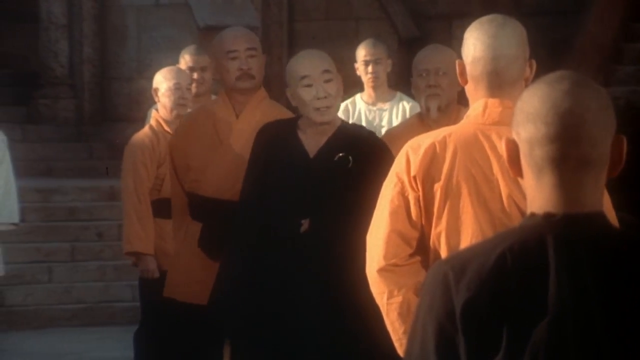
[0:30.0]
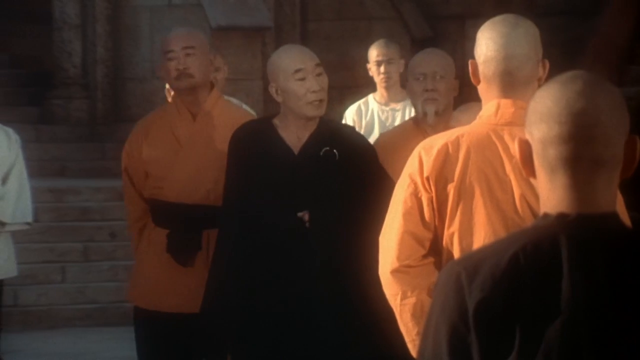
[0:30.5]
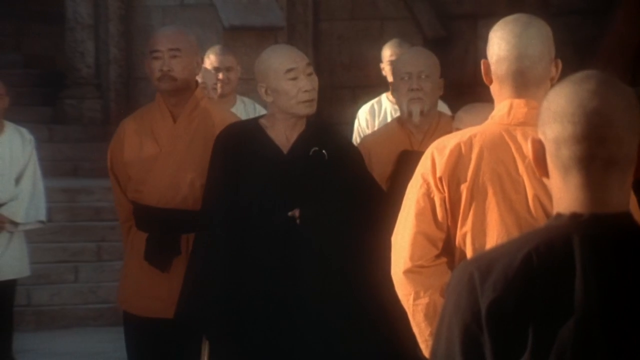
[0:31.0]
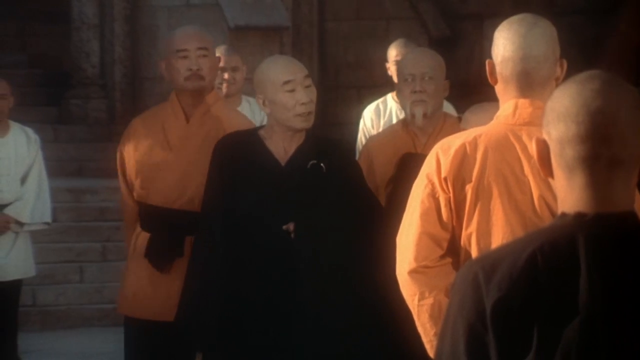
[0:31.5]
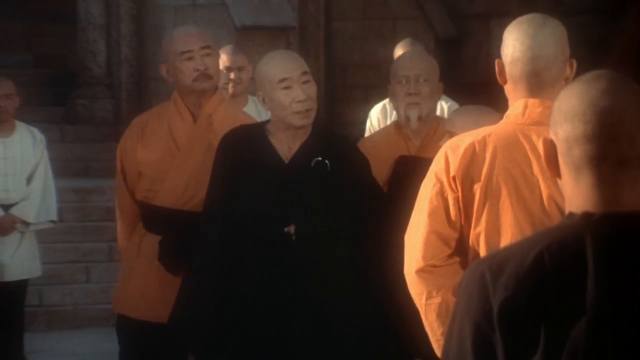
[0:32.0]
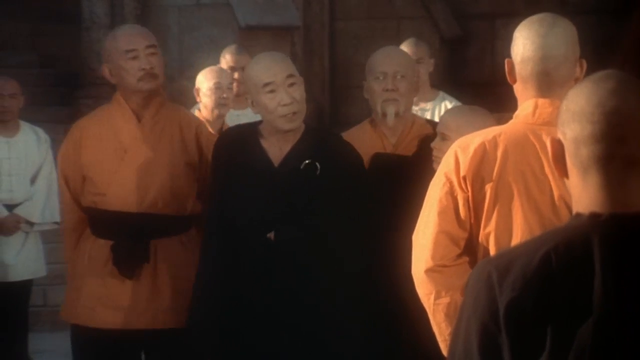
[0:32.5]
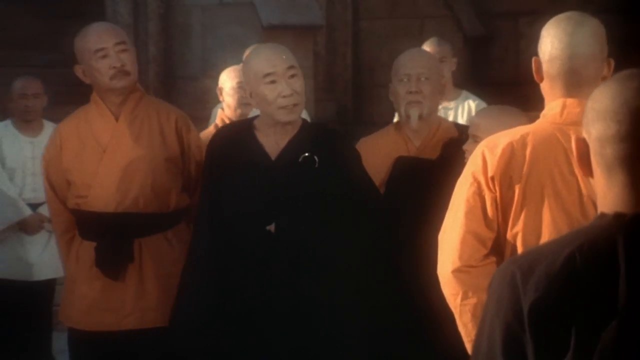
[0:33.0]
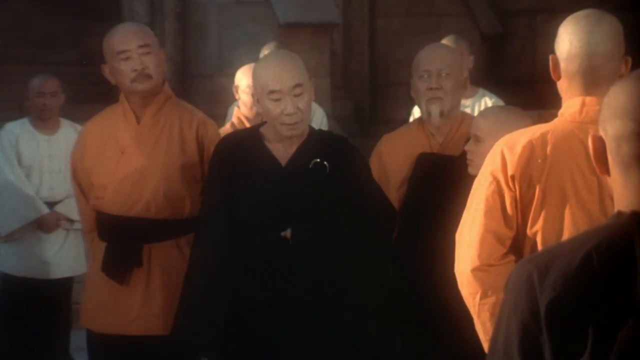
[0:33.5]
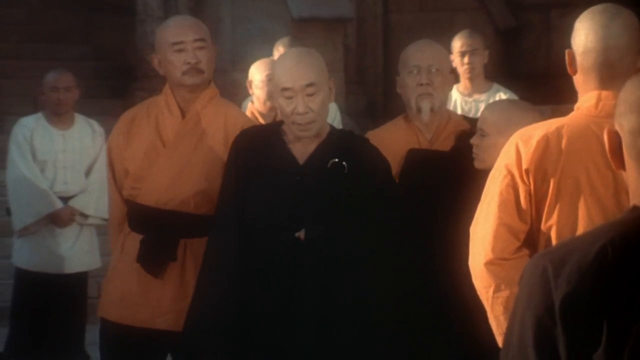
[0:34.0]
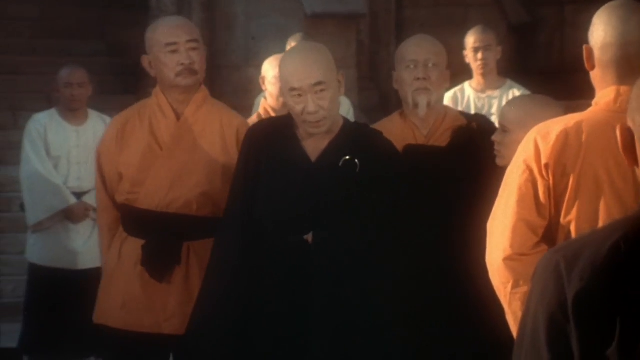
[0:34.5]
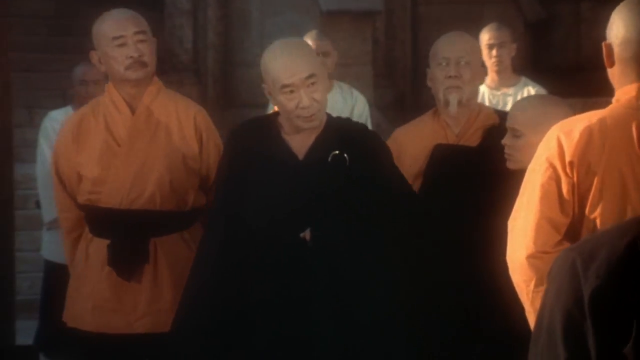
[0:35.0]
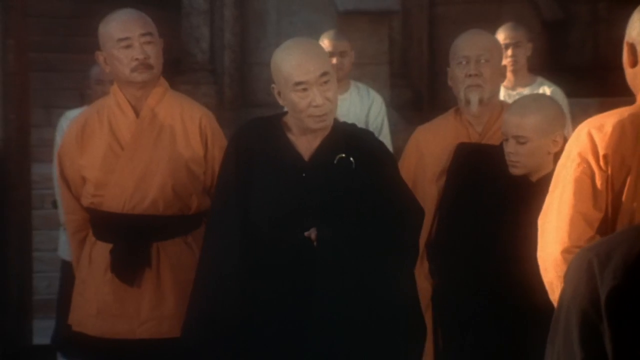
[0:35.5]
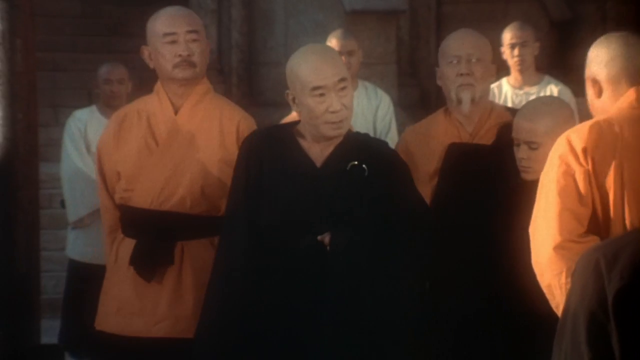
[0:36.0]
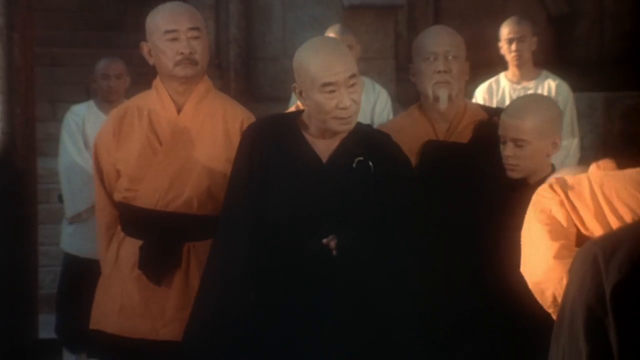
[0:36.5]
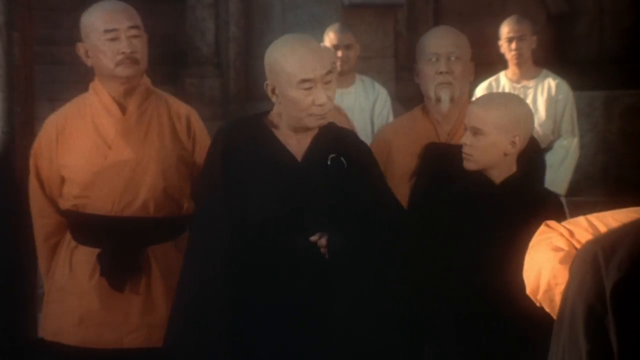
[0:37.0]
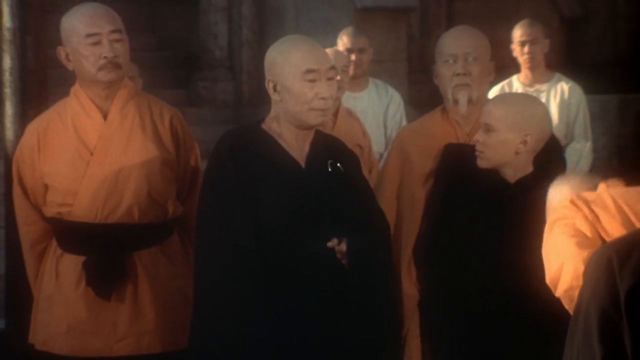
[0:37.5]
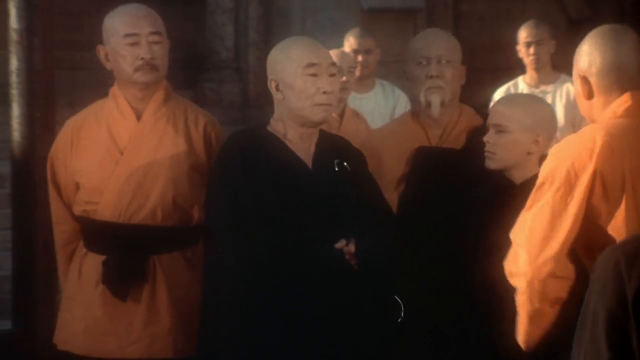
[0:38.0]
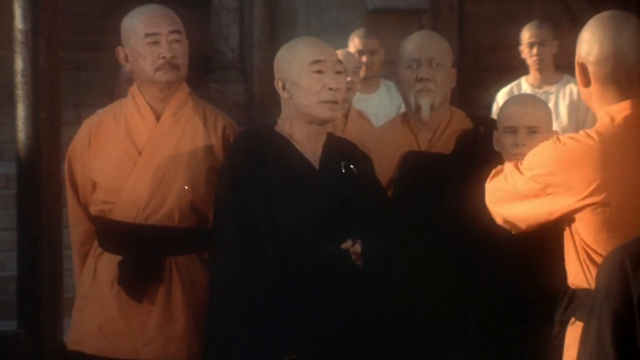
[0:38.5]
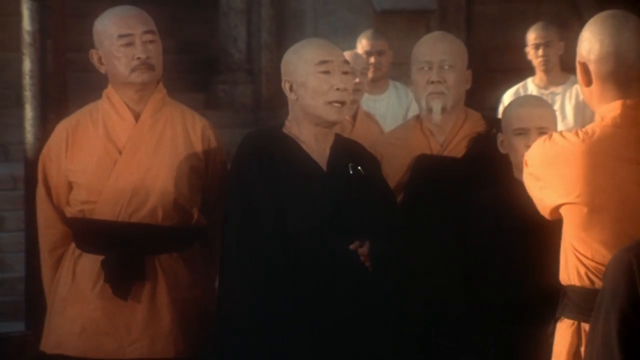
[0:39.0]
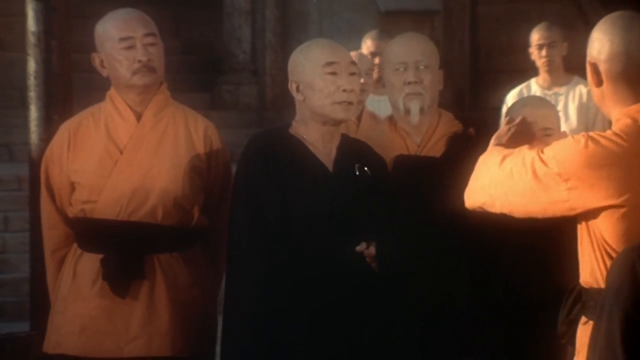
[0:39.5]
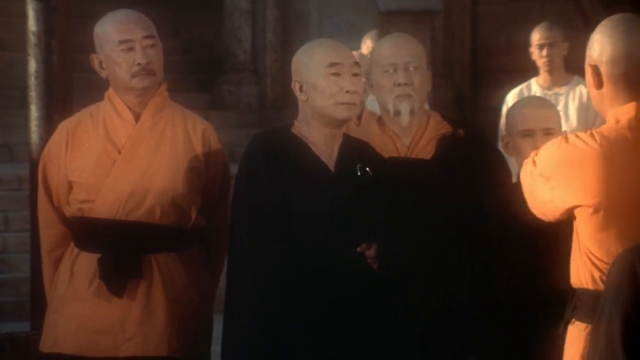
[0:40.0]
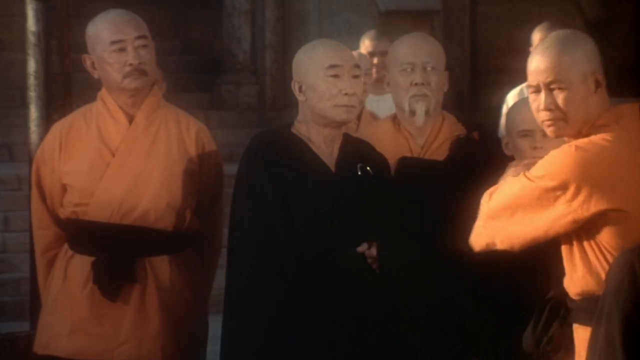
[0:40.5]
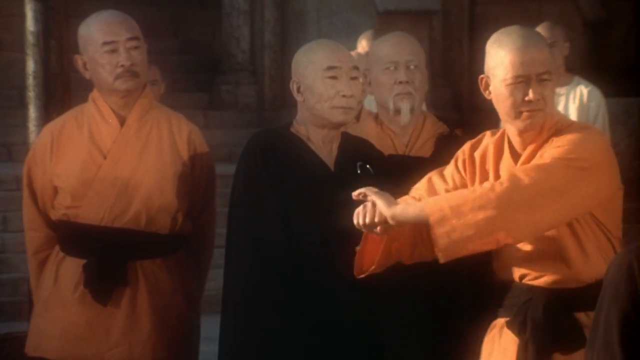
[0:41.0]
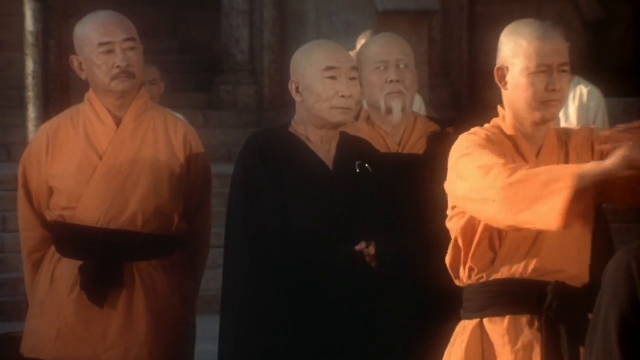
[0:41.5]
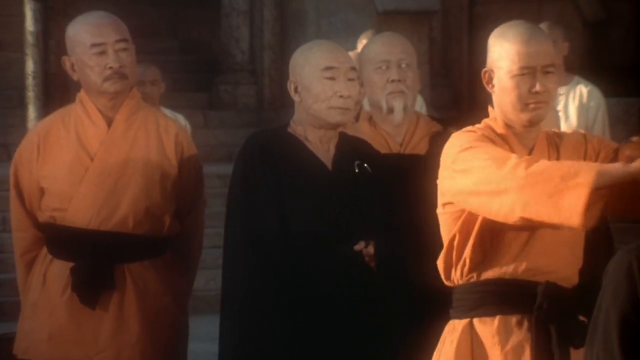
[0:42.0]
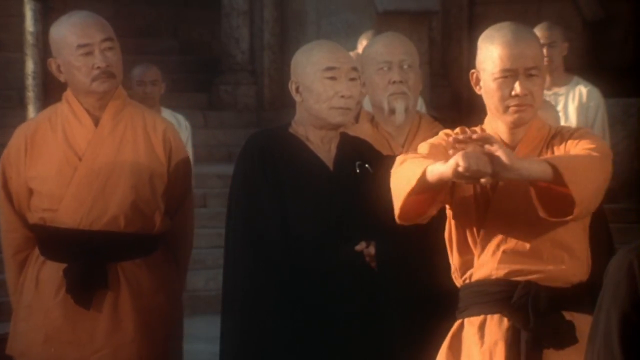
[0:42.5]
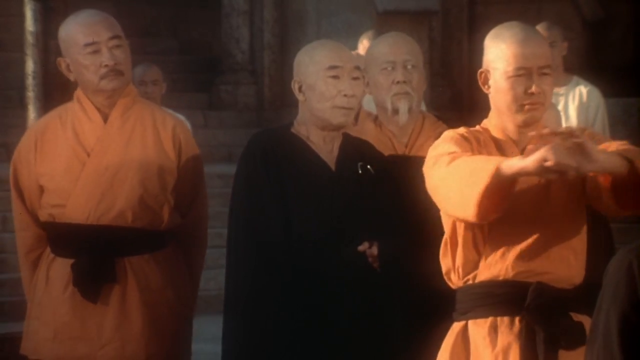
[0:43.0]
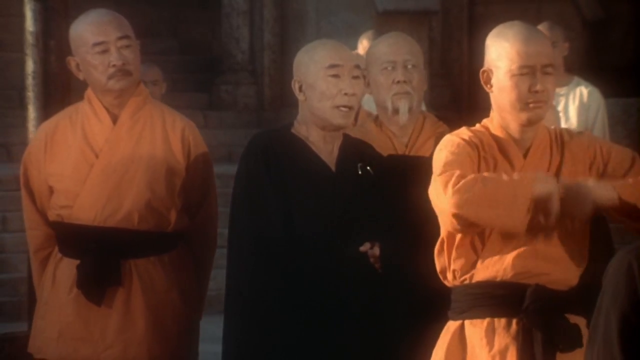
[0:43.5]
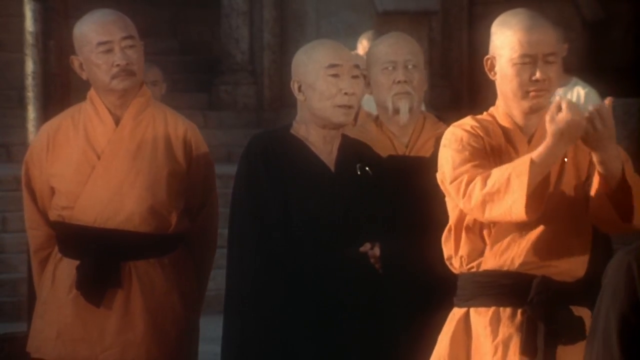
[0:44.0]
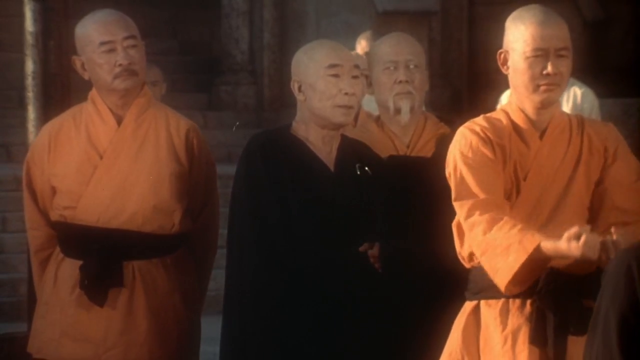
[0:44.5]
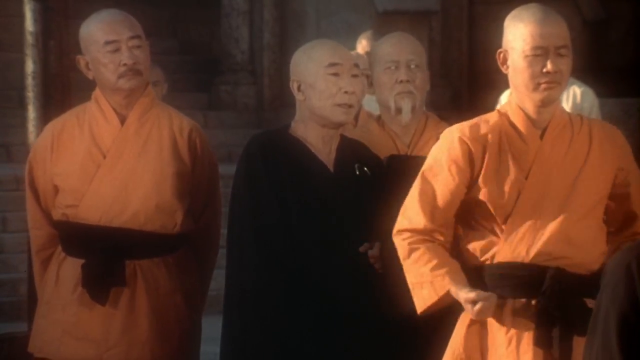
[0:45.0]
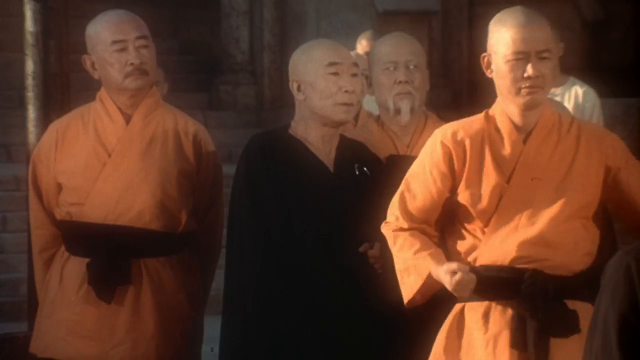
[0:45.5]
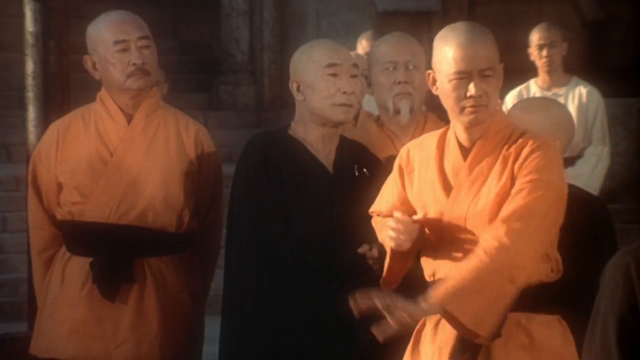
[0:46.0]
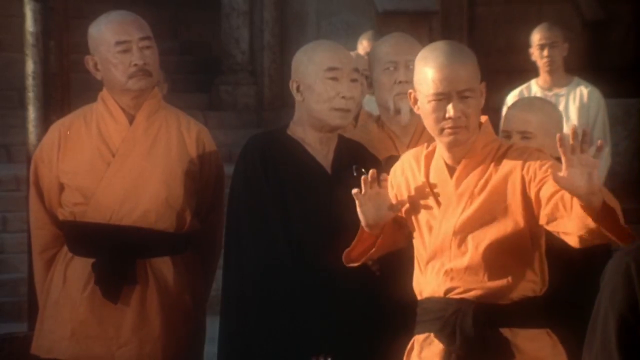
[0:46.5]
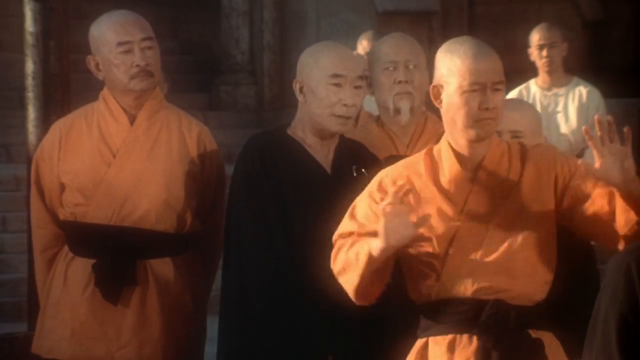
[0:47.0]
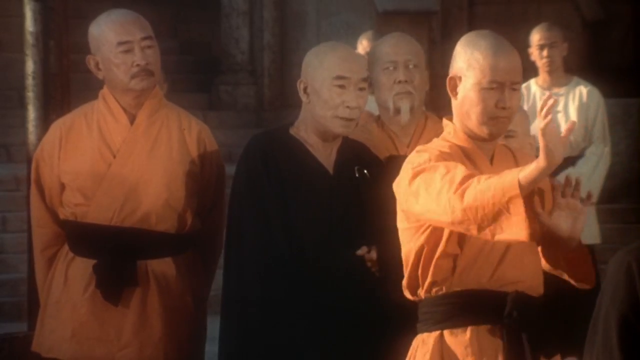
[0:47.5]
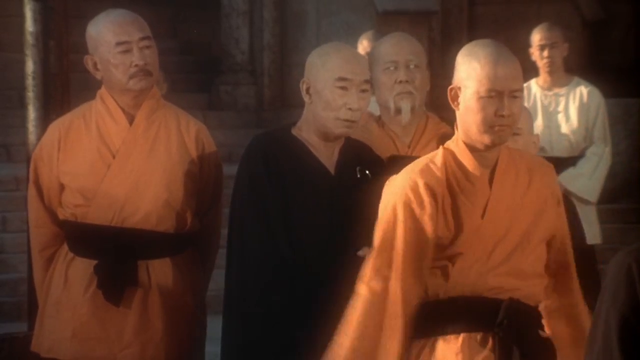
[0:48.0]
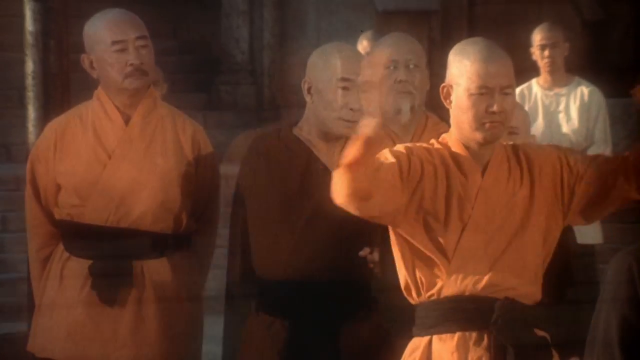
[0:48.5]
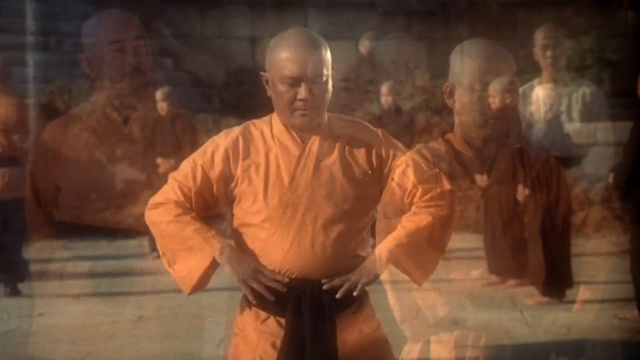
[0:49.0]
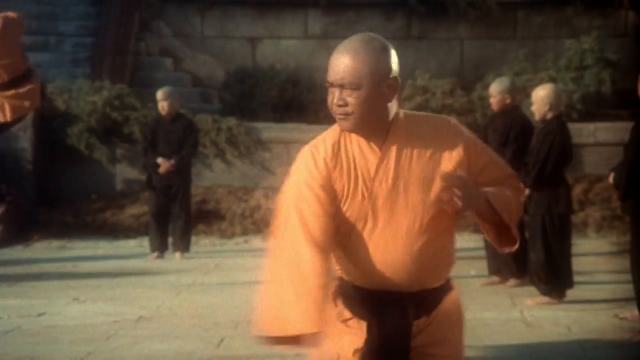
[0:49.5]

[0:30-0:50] The Shaolin monks are followed as an elderly monk in black clothes talks to the young man next to him, while the eyes of nearby monks are visible. The elderly monk stops right next to another monk wearing orange, who bows to him, probably as a sign of respect. The elderly monk talks to the man who bowed, apparently telling him what to do. The monk in the orange suit then performs moves, possibly indicated by the elderly monk, moving around and rotating his body, maybe showing the moves to the younger man next to him. He makes meticulous hand movements, rotating his hands, drawing them toward his body, to his side, from left to right, forward and backward, all on the right side of the screen.